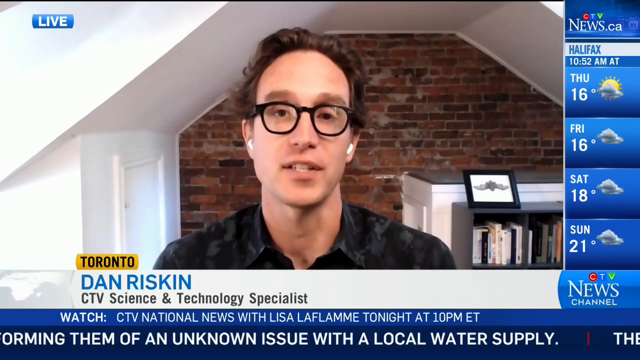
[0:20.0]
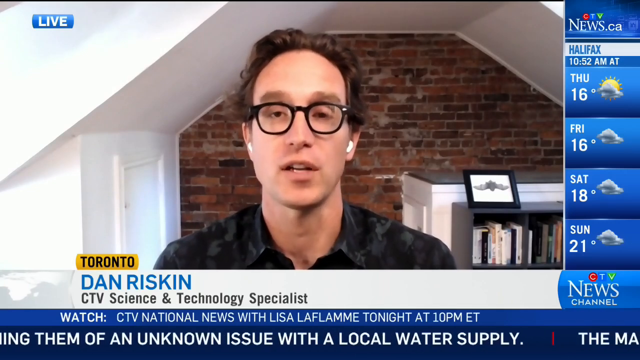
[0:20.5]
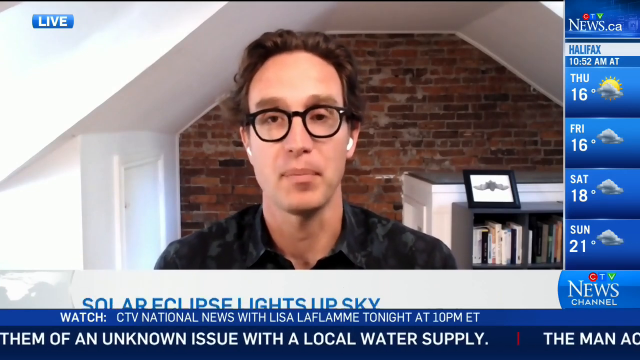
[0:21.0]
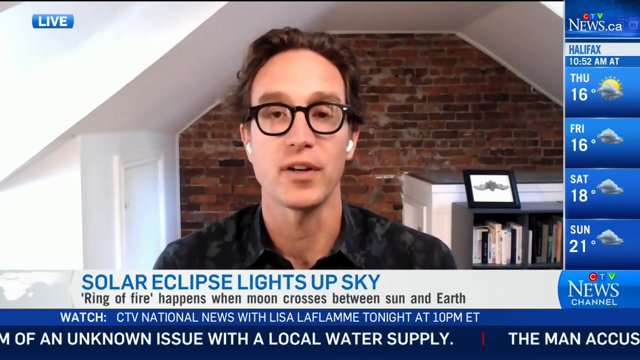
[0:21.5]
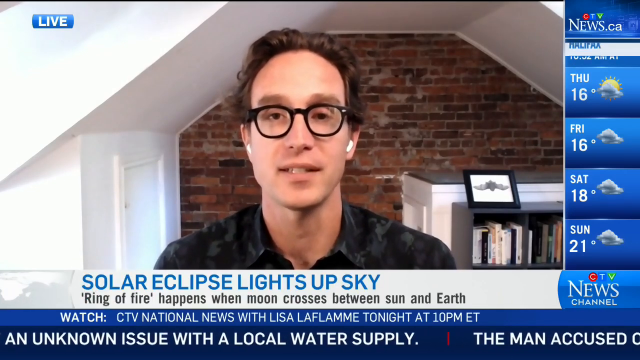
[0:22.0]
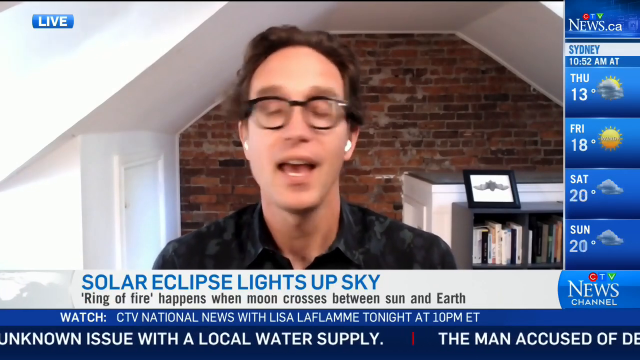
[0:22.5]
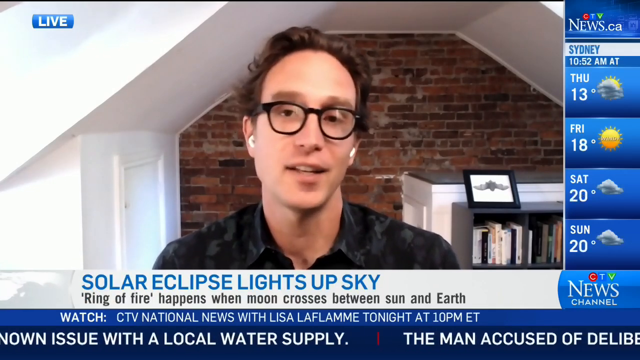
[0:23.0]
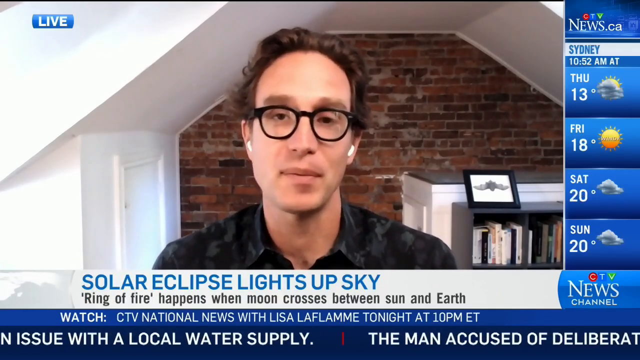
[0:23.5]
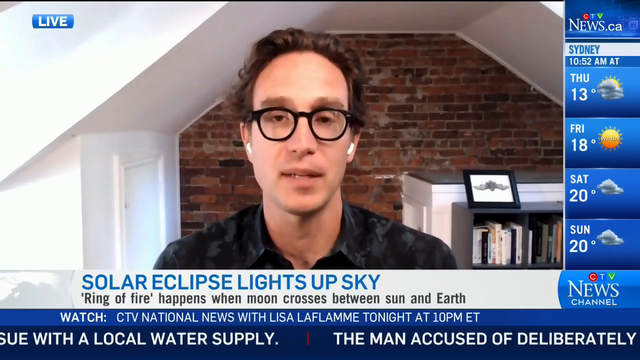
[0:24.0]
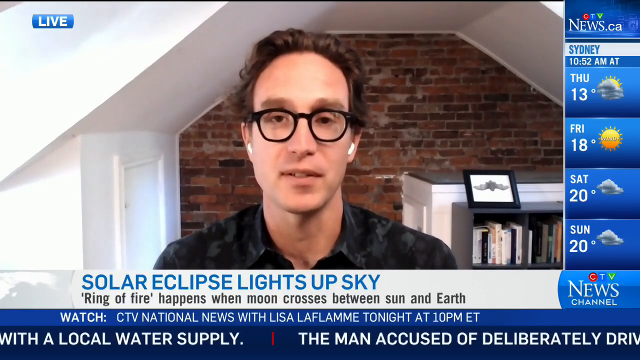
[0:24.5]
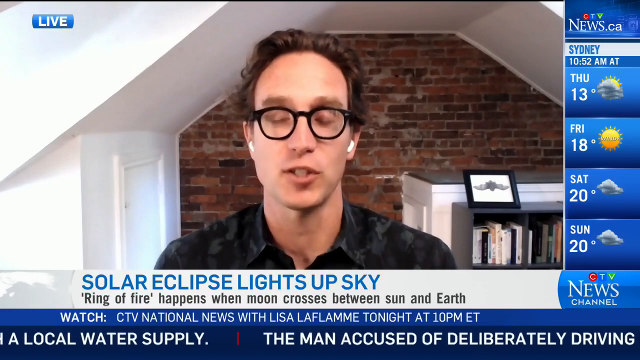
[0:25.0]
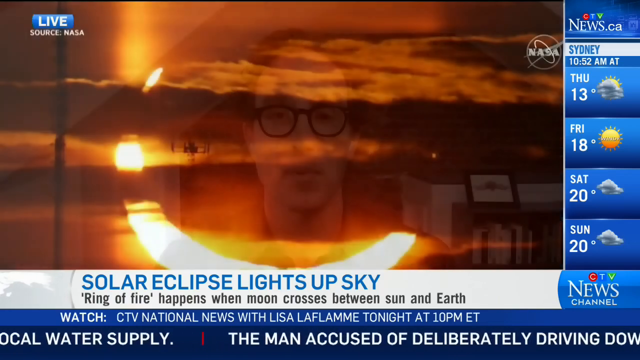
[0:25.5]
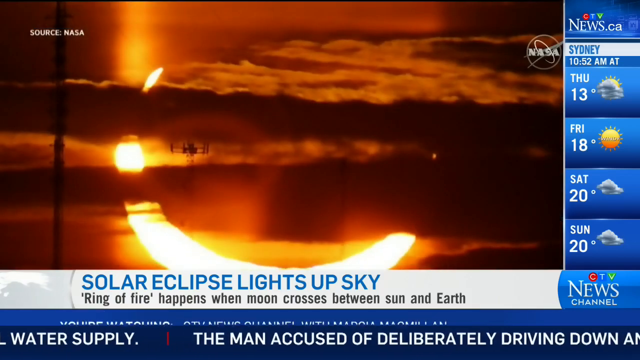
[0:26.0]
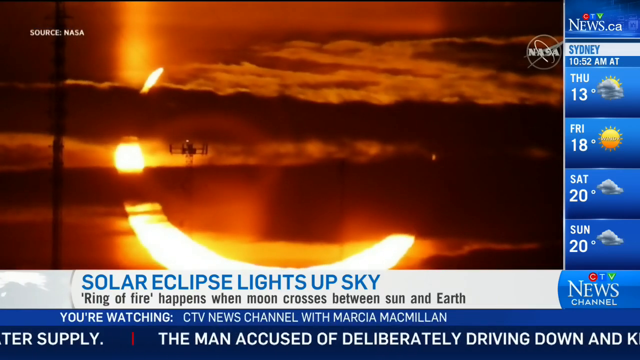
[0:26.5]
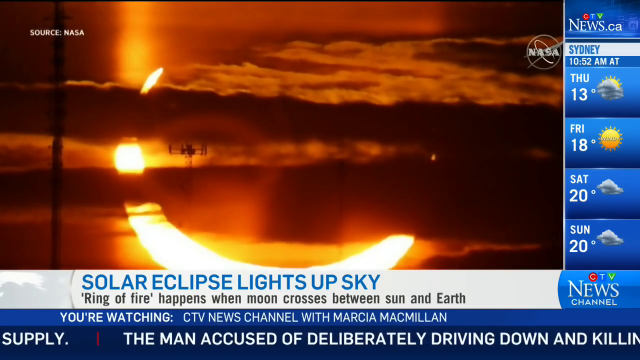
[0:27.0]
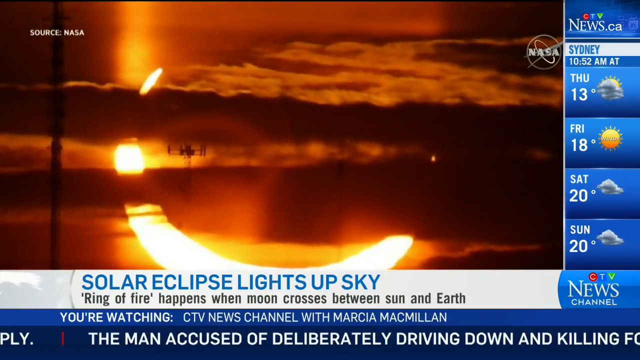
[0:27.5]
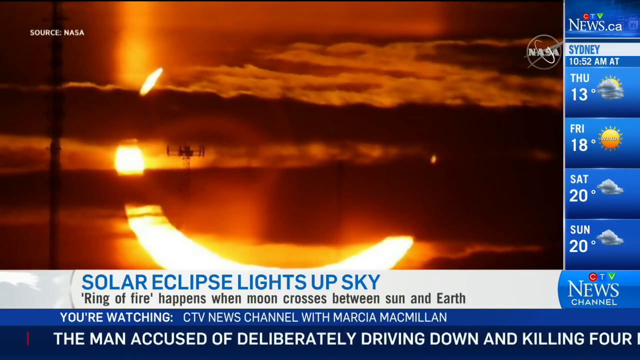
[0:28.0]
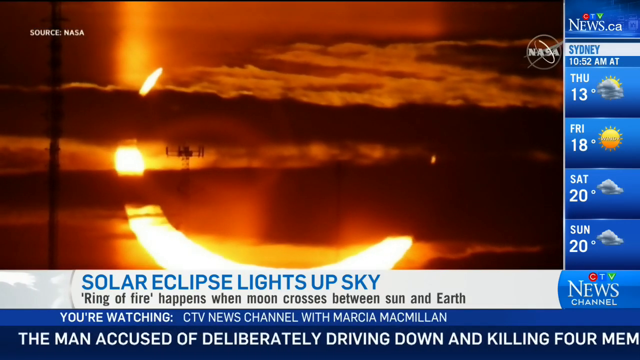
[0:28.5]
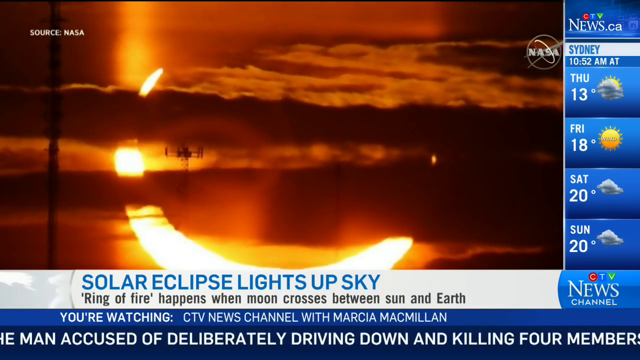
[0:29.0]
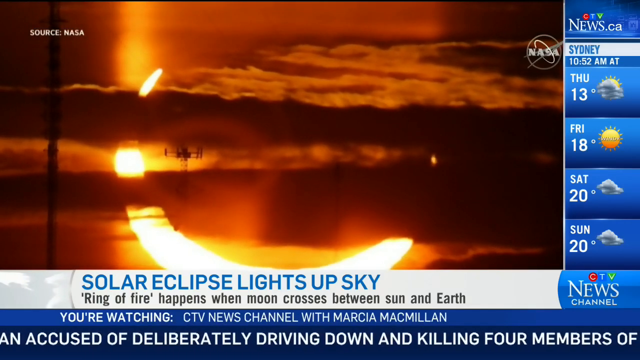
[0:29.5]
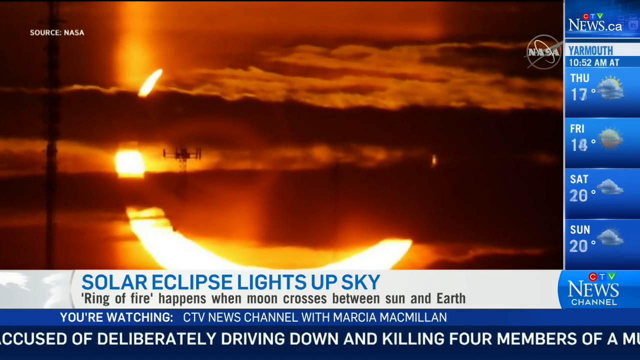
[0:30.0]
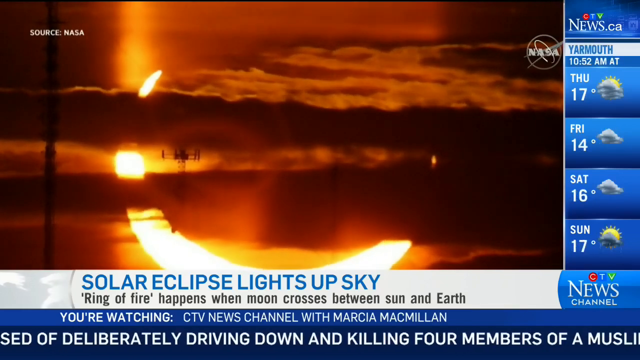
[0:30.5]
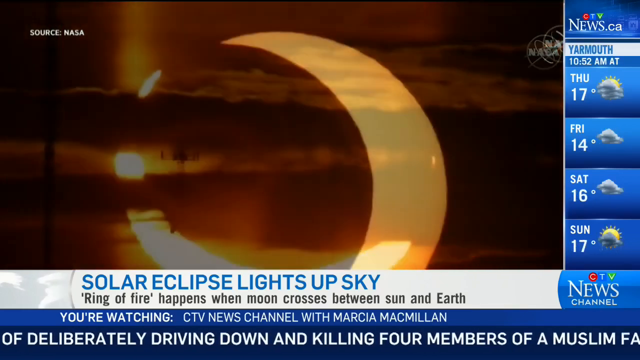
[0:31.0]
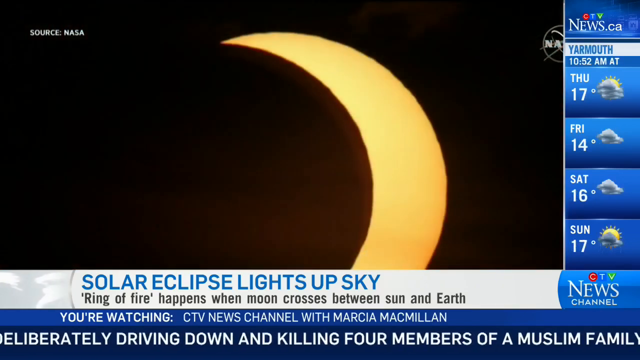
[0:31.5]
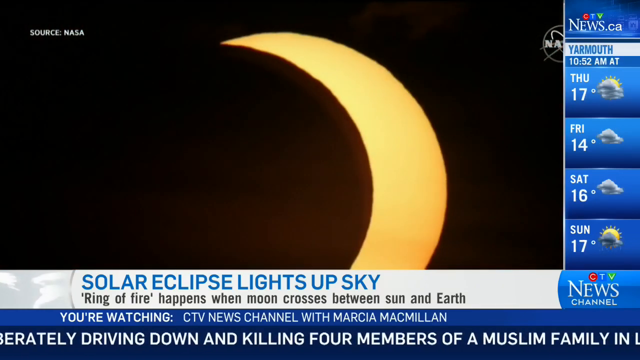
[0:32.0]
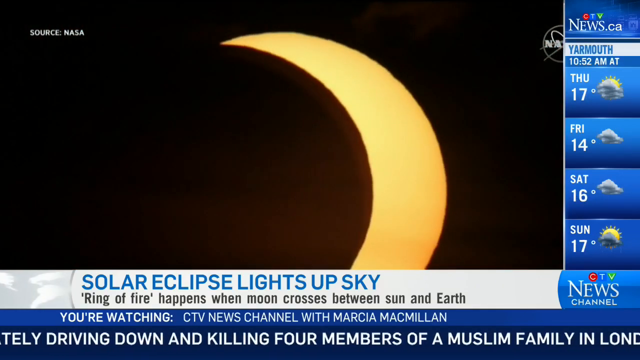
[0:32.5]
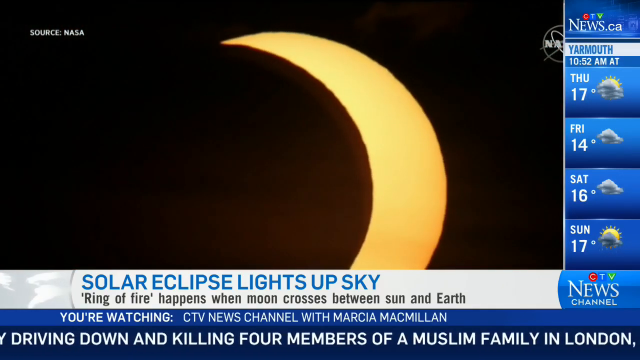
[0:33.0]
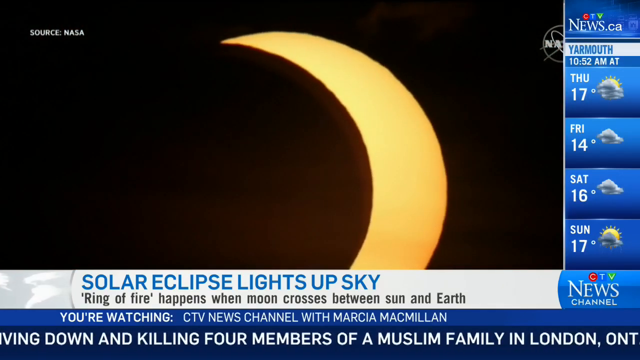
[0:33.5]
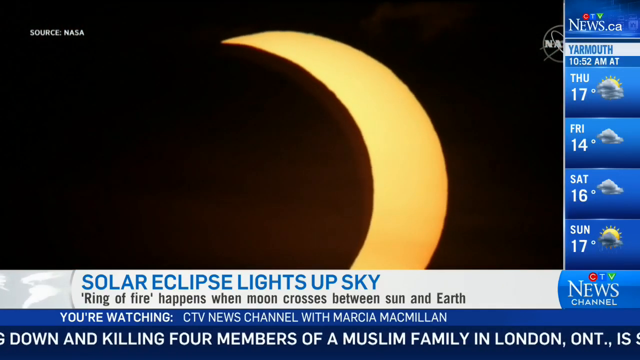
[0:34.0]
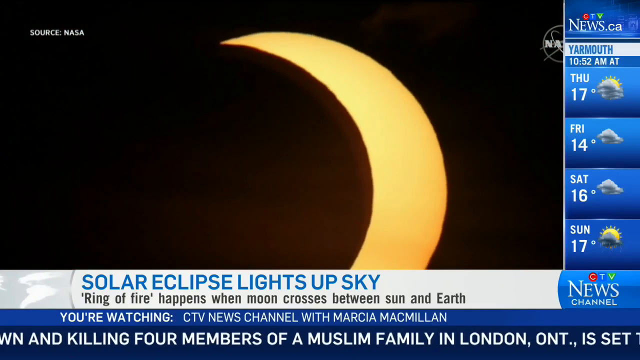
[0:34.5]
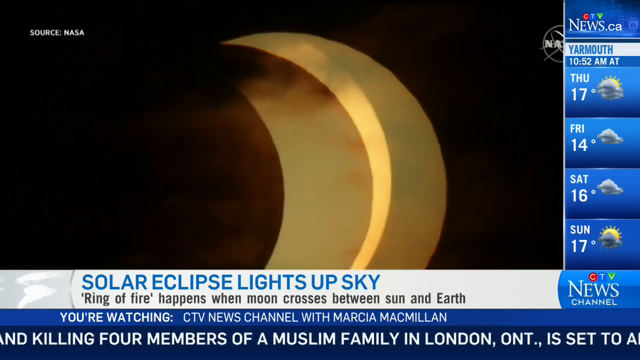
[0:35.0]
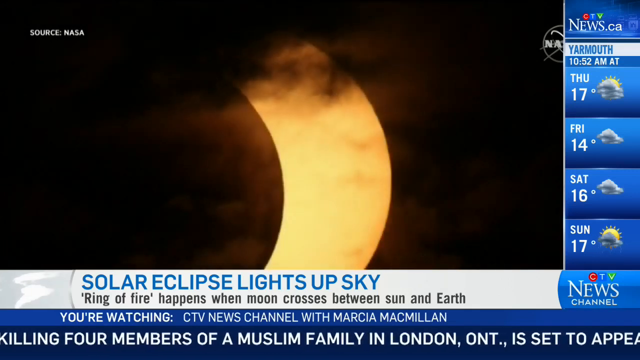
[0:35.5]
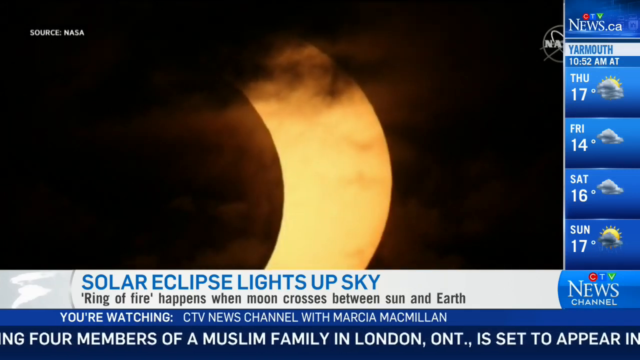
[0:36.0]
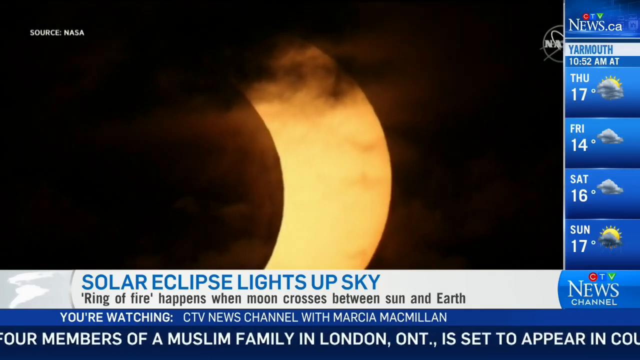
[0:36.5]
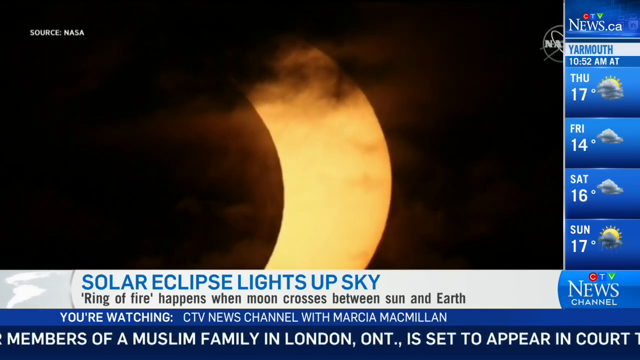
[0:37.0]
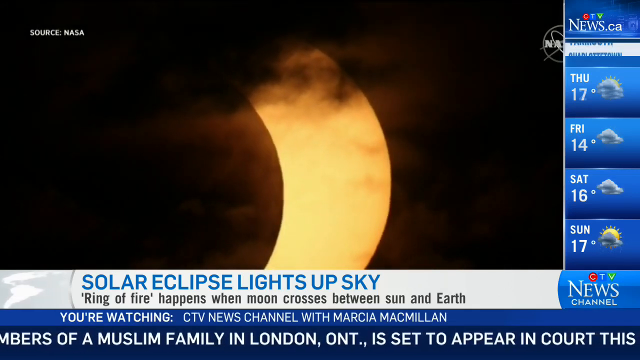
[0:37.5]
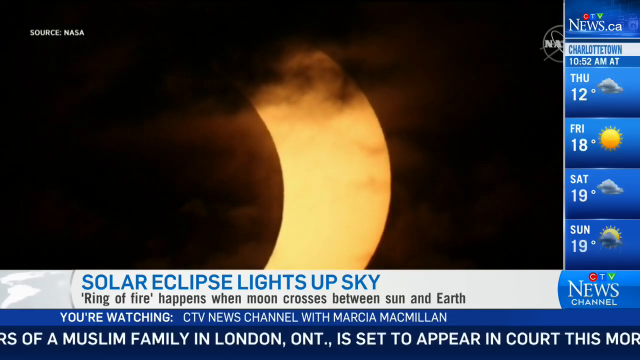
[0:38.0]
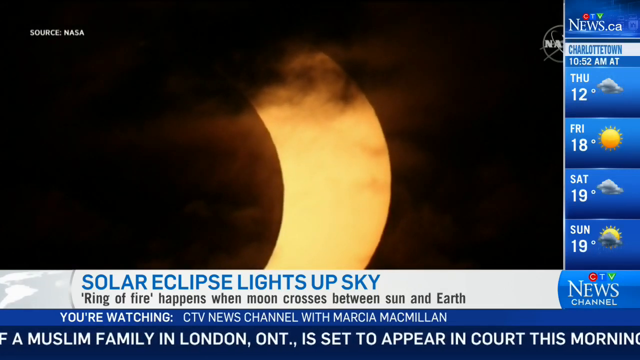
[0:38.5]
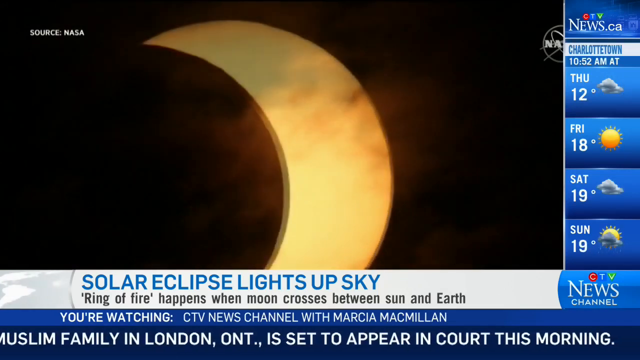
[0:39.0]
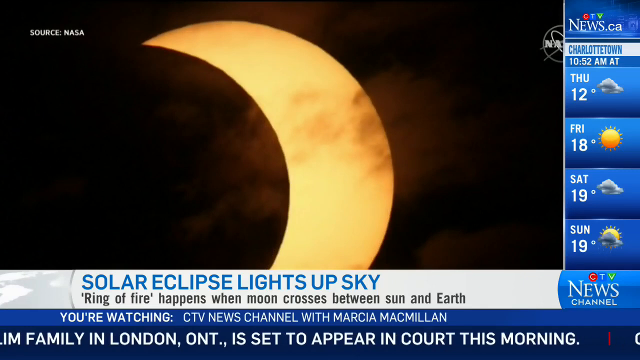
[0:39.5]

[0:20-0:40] On the screen is written "Toronto City Village Science and Technology Specialist". An image credited to NASA shows a sun under the clouds. The next slide shows a broken moon setting at night, and the one after shows the moon half hidden by clouds. Weather listings for different places appear on the screen: Halifax at 10:52 am shows Thursday 16 degrees, Friday 16 degrees, Saturday 18 degrees and Sunday 21 degrees; Sydney shows Thursday 13 degrees, Friday 18 degrees, Saturday 20 degrees and Sunday 20 degrees; another location shows Thursday 17 degrees, Friday 14 degrees and Saturday 16 degrees.